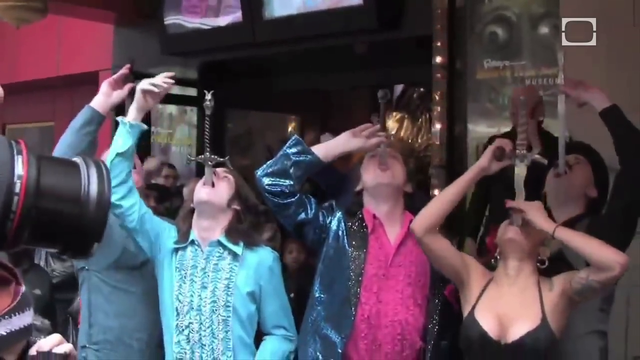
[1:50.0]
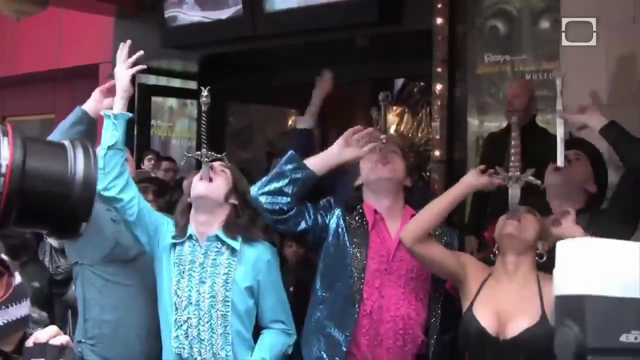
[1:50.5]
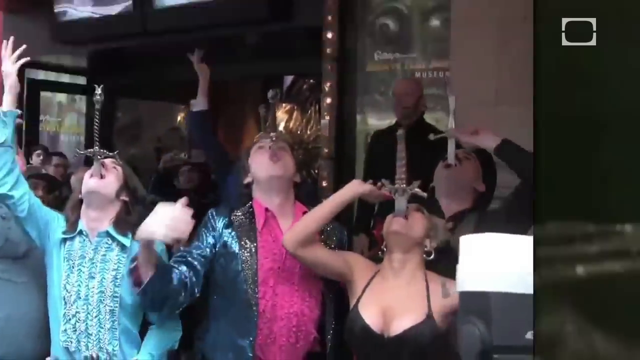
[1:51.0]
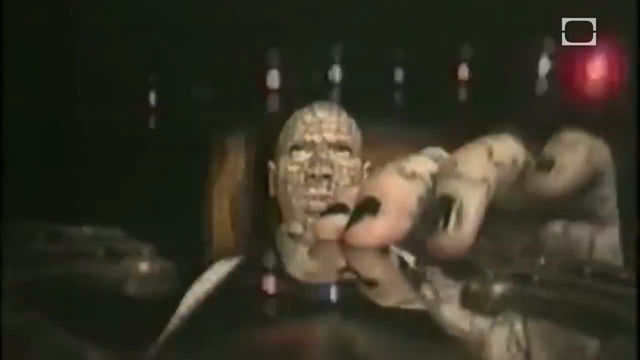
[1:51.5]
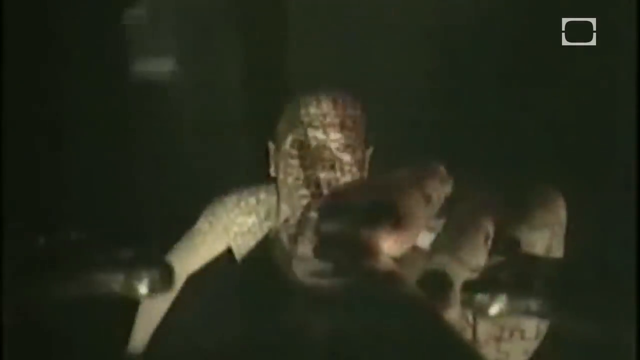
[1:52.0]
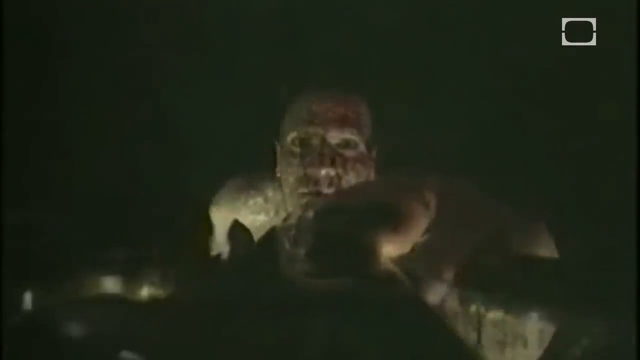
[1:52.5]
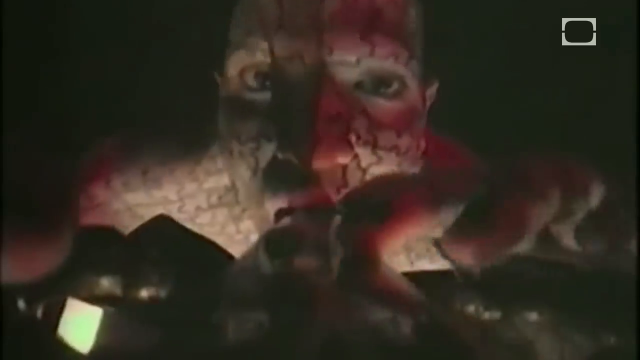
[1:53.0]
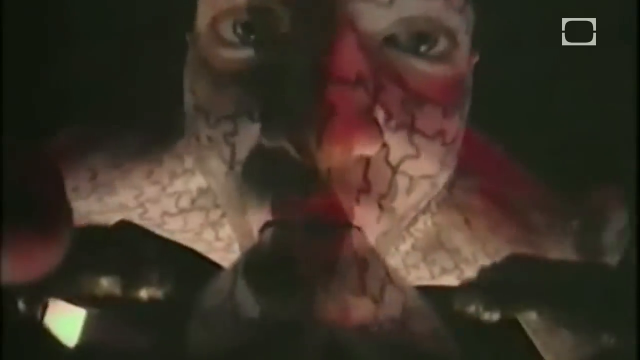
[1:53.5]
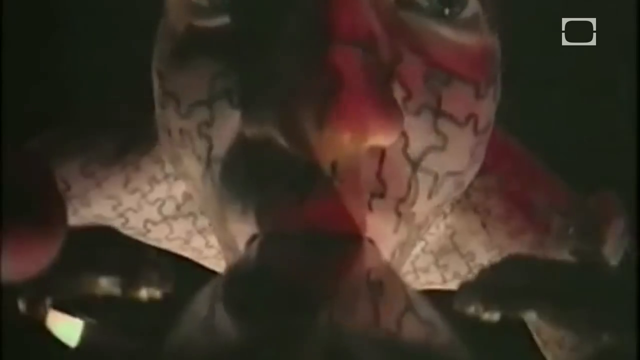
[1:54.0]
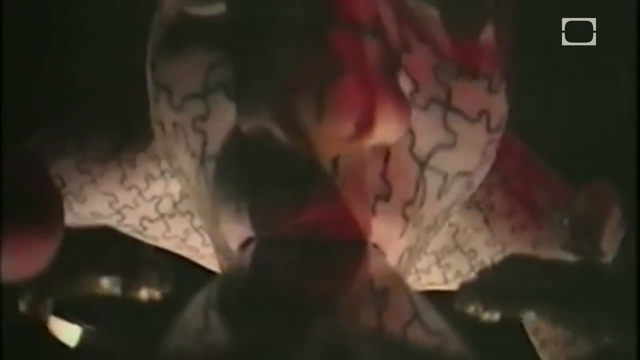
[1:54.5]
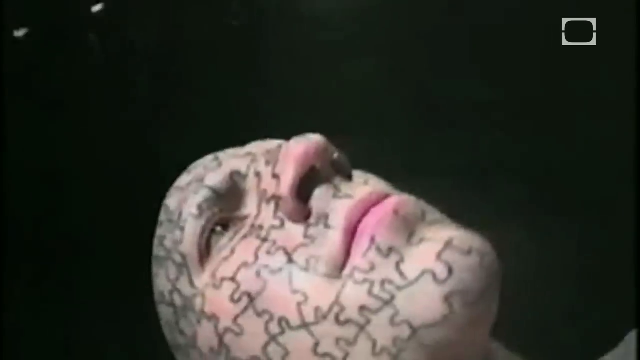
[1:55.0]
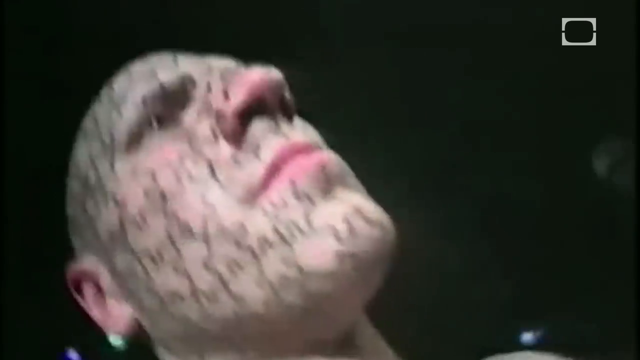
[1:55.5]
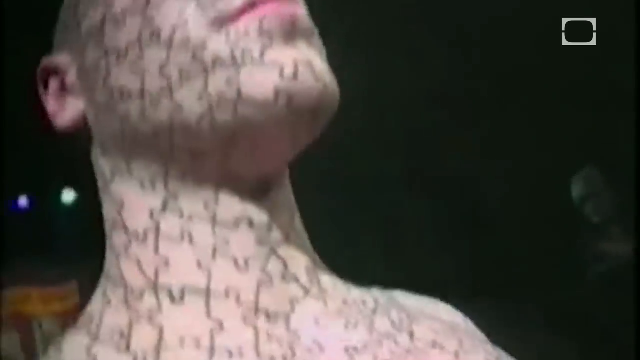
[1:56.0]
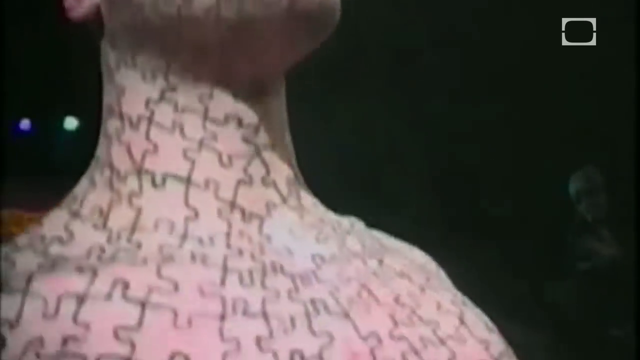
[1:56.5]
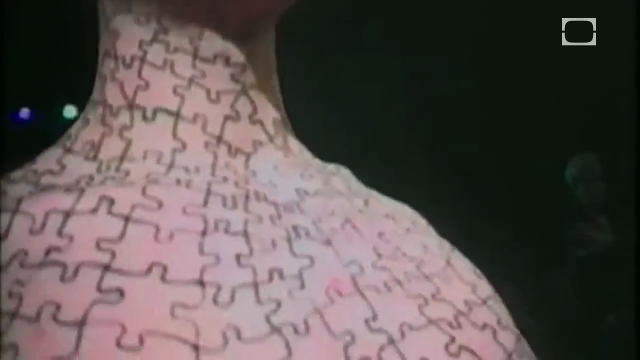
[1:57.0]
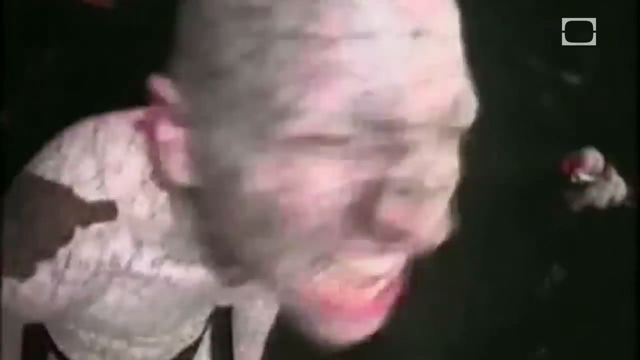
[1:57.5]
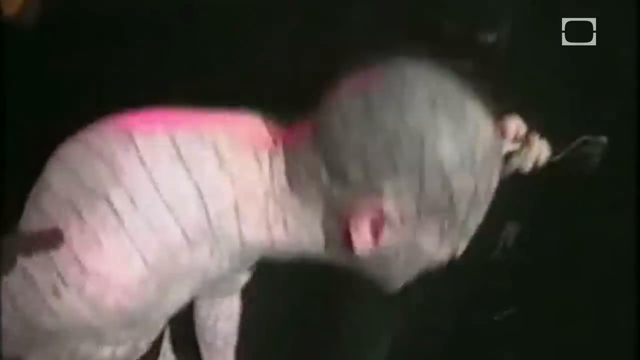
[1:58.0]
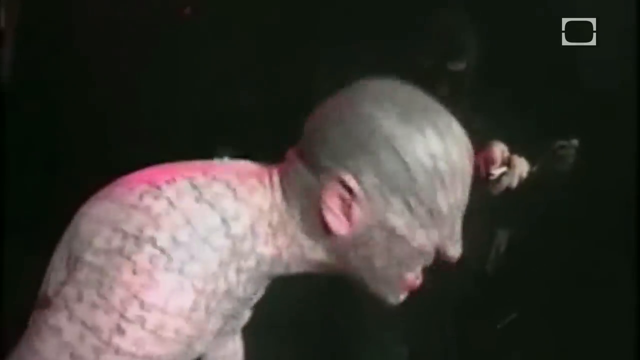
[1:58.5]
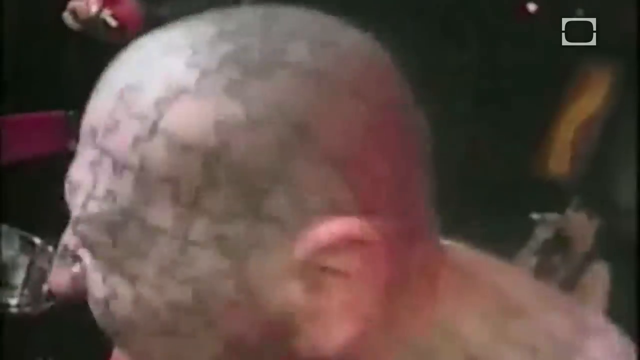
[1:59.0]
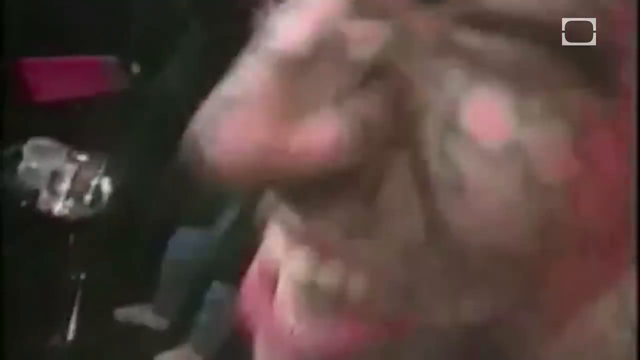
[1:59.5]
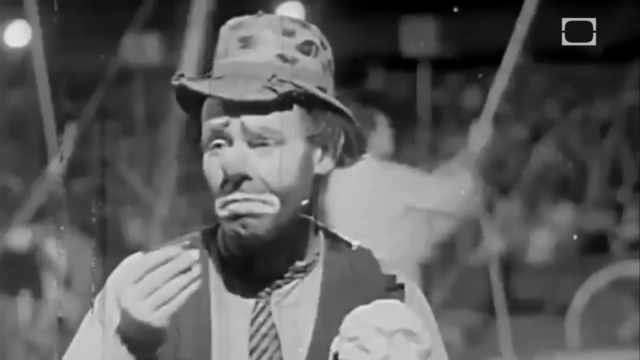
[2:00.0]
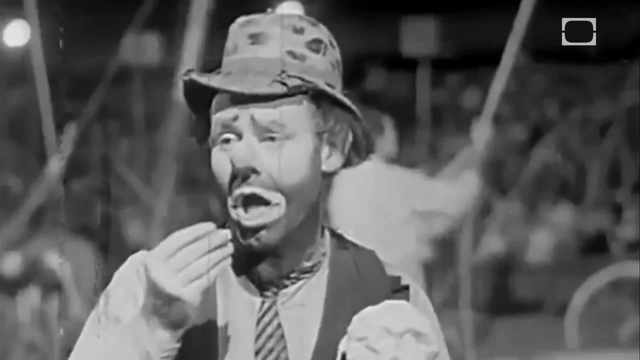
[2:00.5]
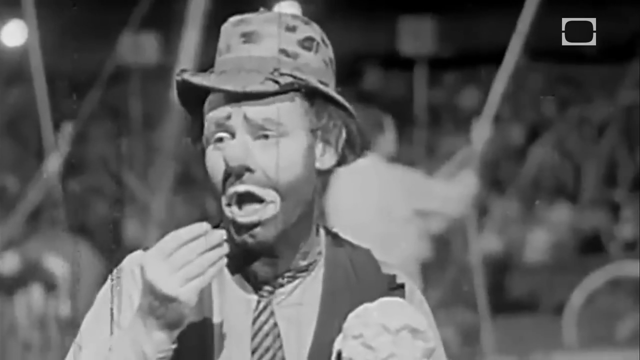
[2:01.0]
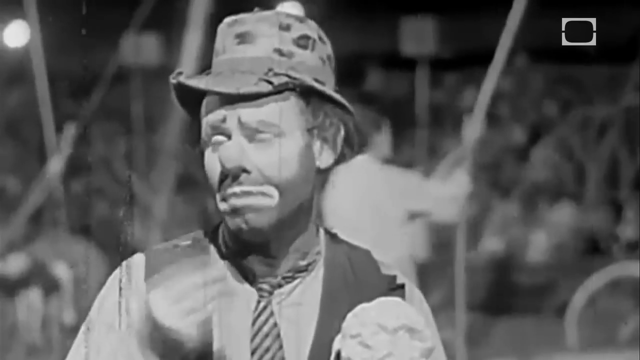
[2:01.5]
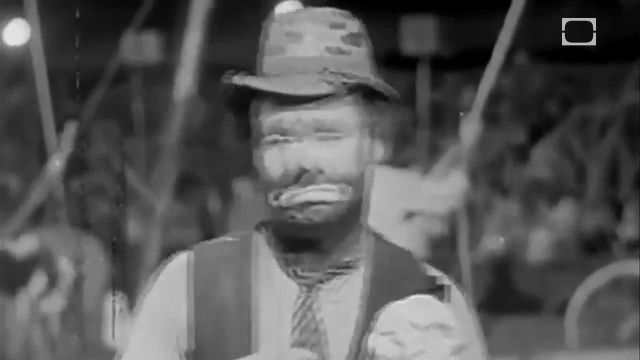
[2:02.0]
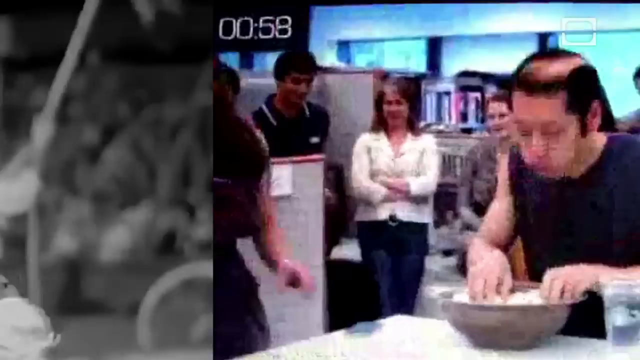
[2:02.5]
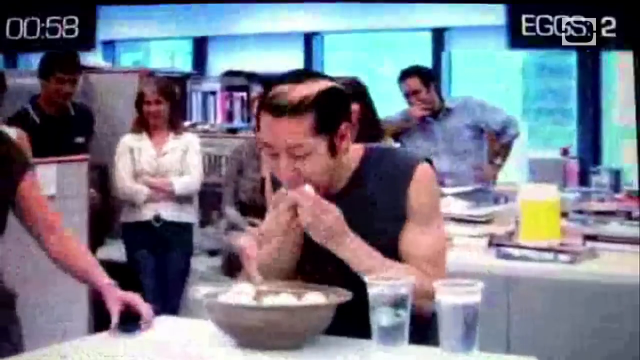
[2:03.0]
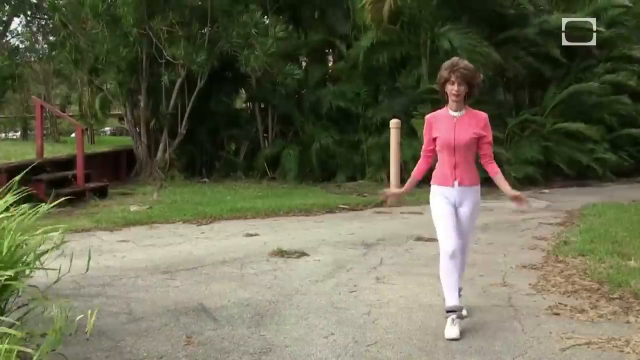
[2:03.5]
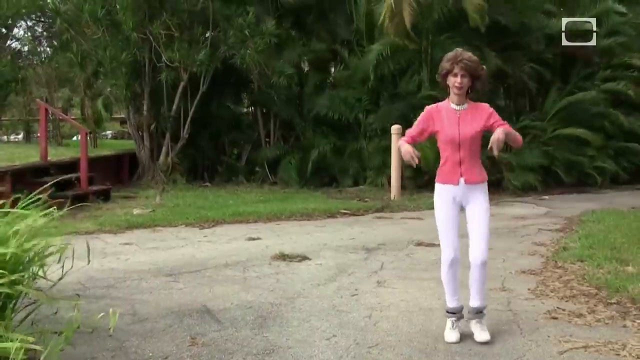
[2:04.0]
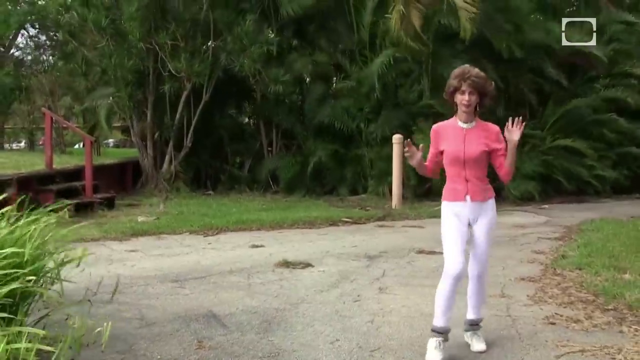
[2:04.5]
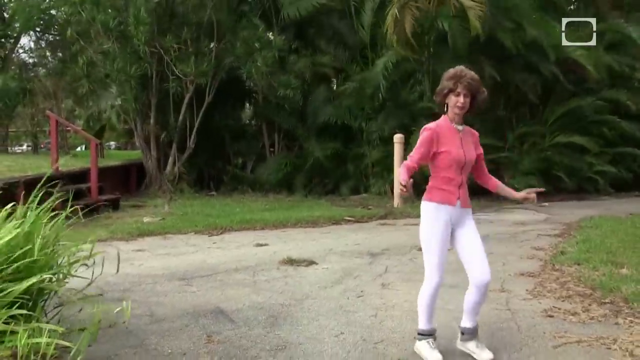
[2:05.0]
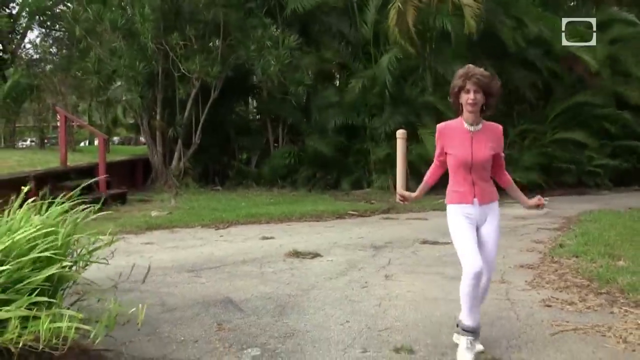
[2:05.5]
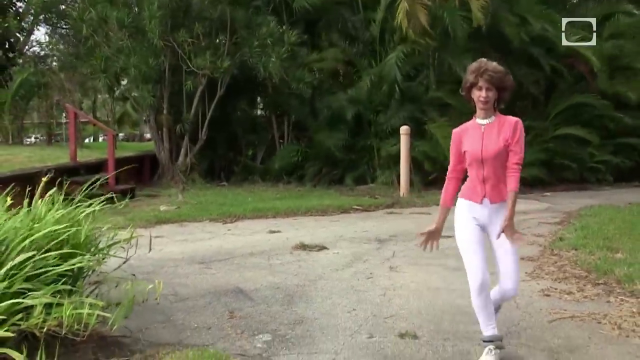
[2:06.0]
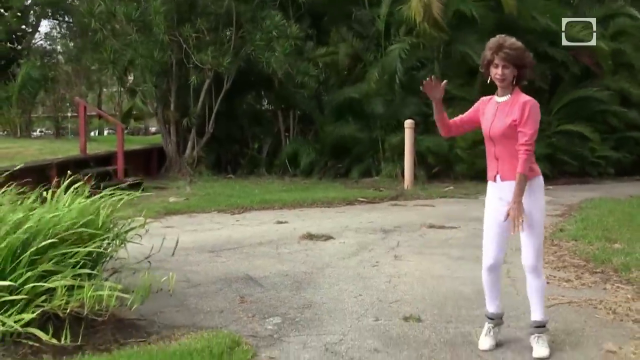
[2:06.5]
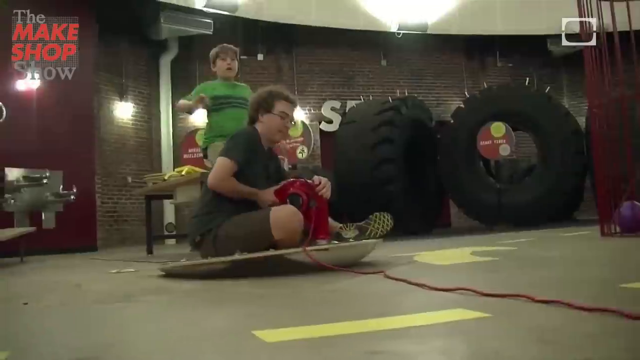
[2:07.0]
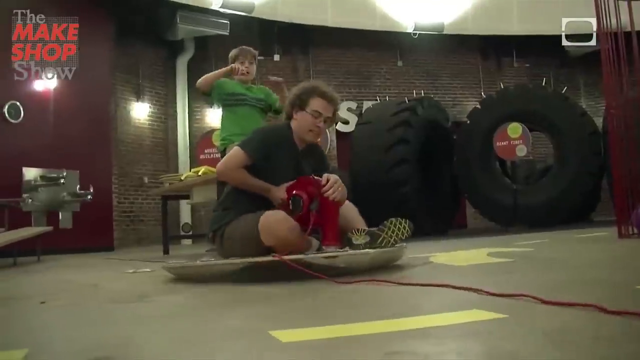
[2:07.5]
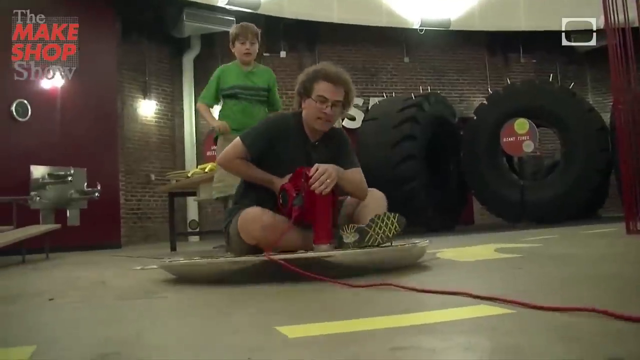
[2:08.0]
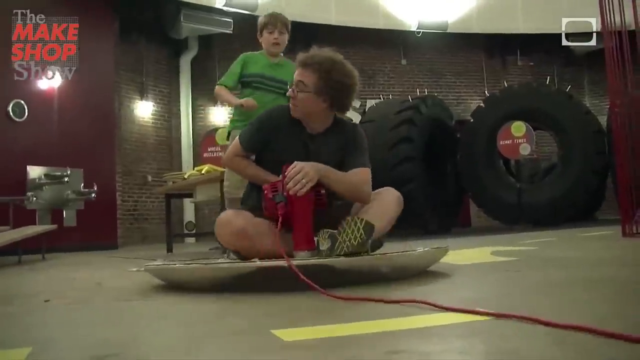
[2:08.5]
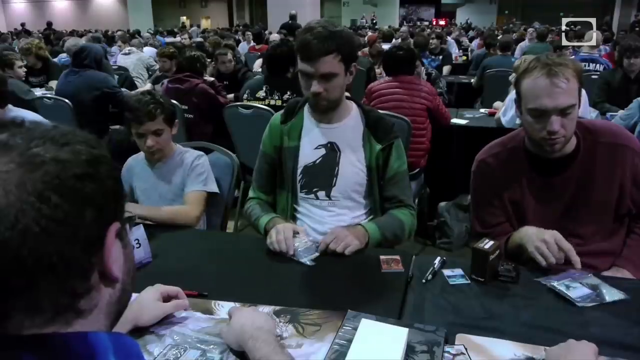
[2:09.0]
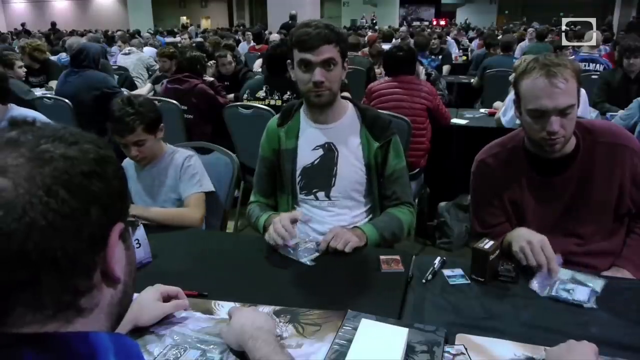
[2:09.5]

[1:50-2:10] A man who appears to have a puzzle tattoo over his face and all over his body, another sword swallower, prepares to put a sword in his mouth as part of an exhibition or show. A black-and-white clown and various other oddities follow. The video cuts to a woman wearing a wig, a pink shirt and white pants, dancing outside. A man eats a lot of eggs, seemingly in a competitive eating race. A man sits on some sort of sander, riding it on the floor with his legs wrapped around it and a kid behind him. Another odd act shows someone carrying what look like weights, a tank on each side, using their mouth to carry the tanks like a weight.